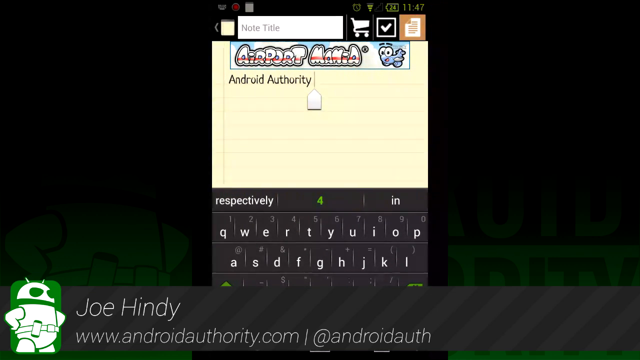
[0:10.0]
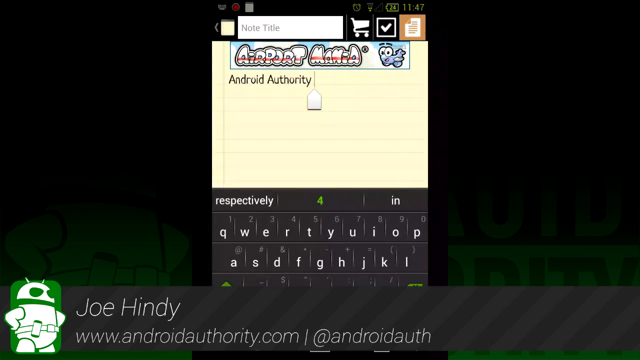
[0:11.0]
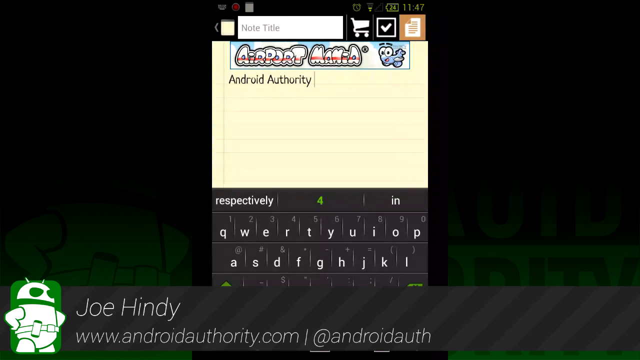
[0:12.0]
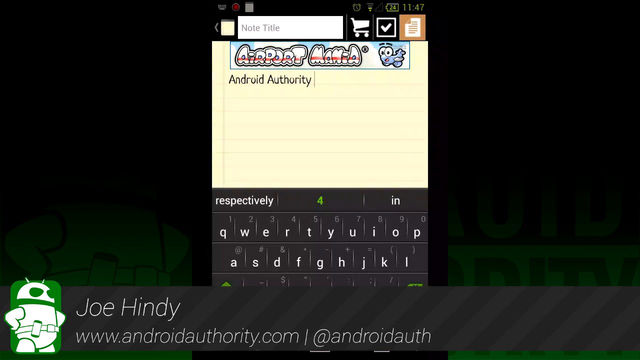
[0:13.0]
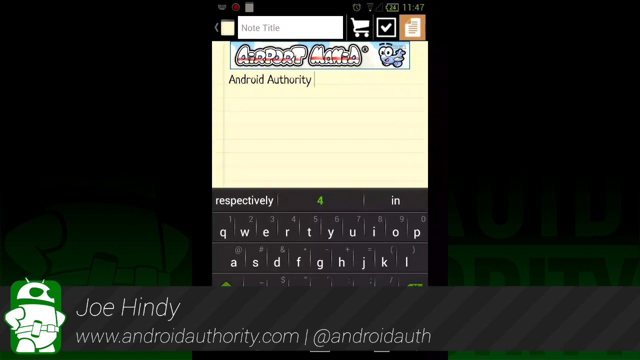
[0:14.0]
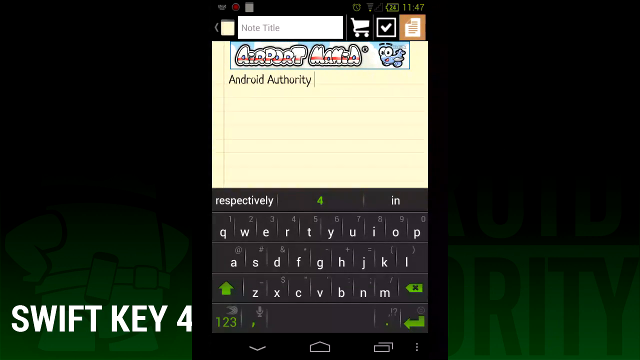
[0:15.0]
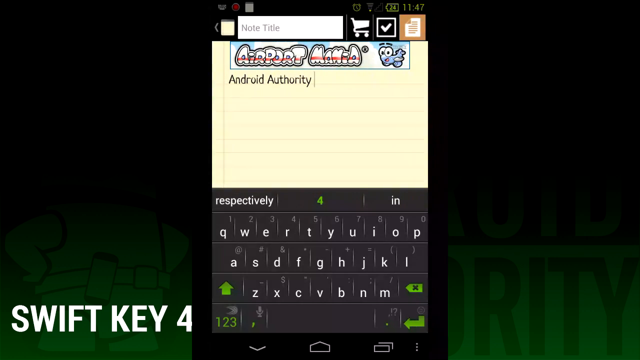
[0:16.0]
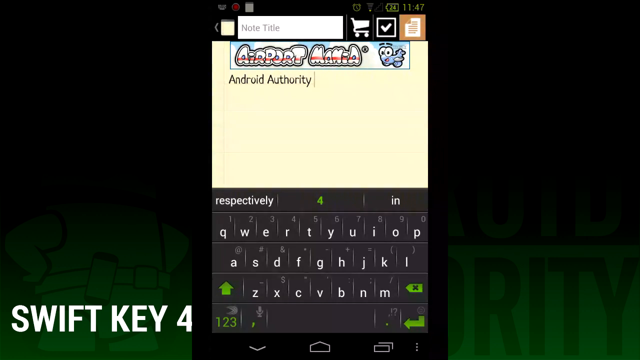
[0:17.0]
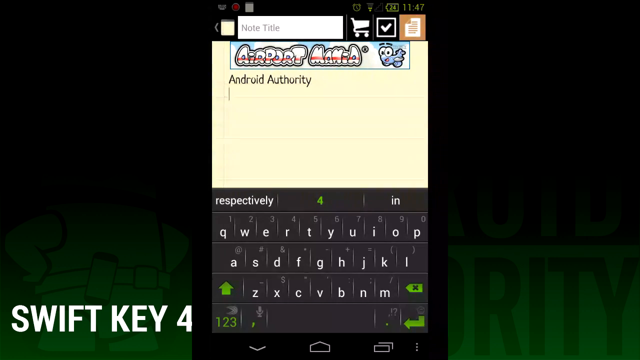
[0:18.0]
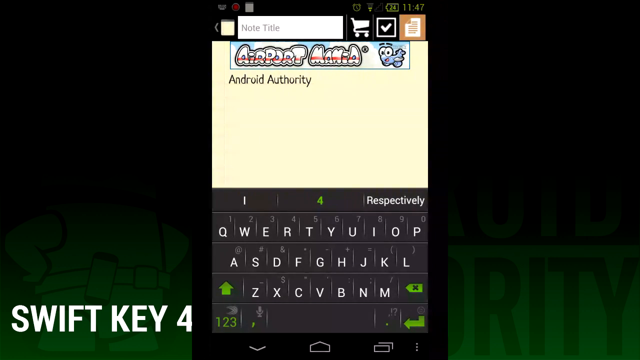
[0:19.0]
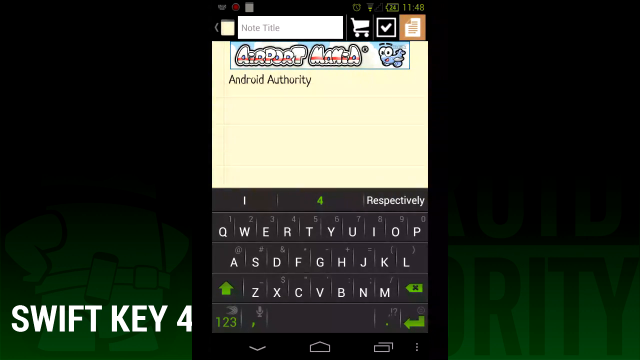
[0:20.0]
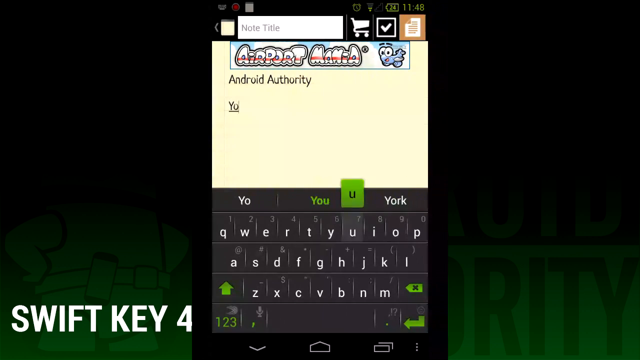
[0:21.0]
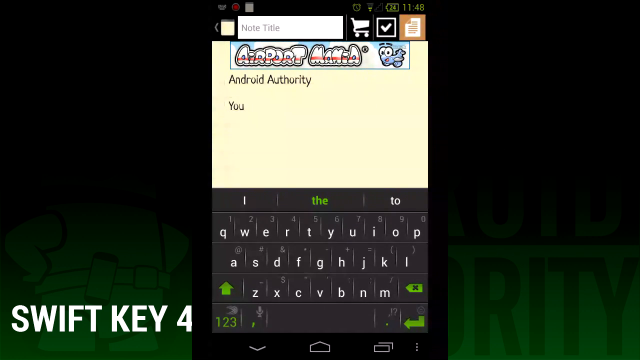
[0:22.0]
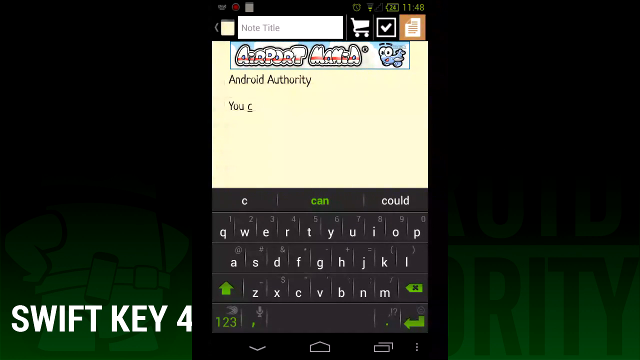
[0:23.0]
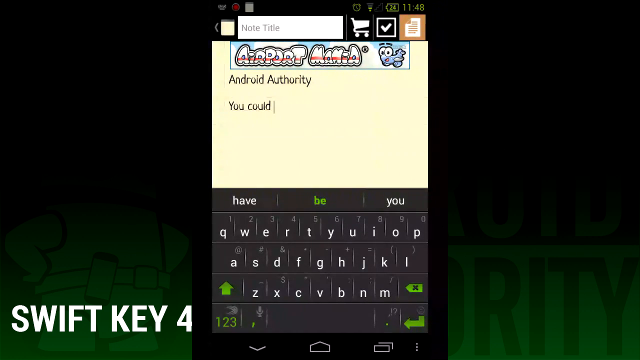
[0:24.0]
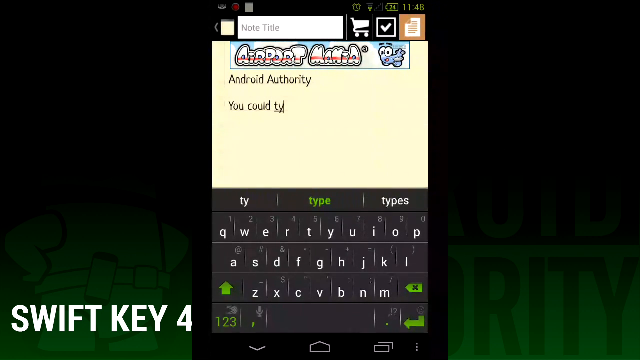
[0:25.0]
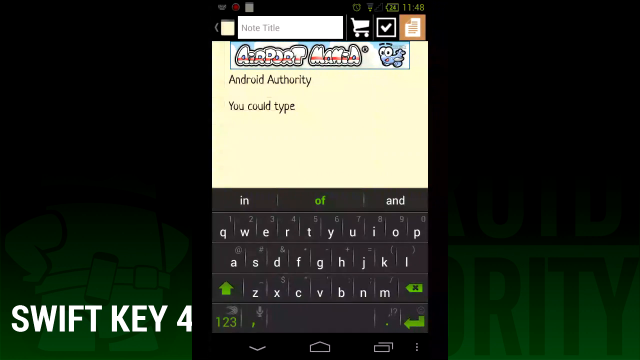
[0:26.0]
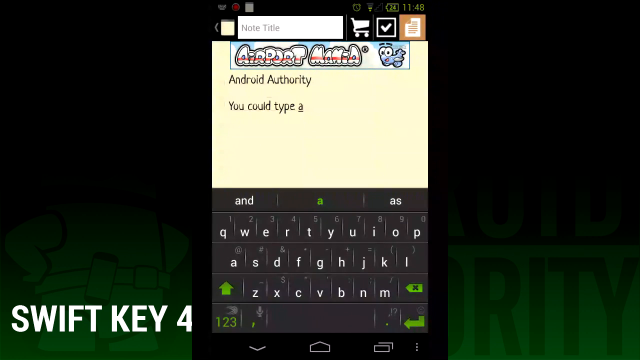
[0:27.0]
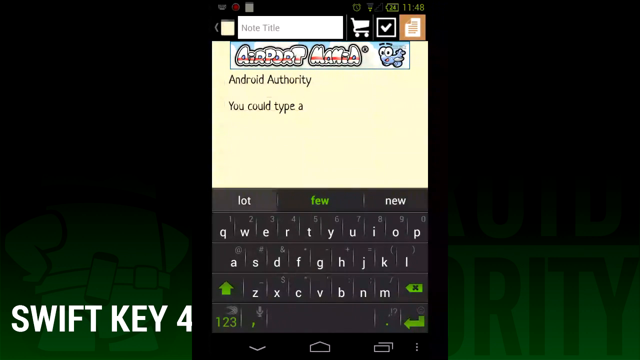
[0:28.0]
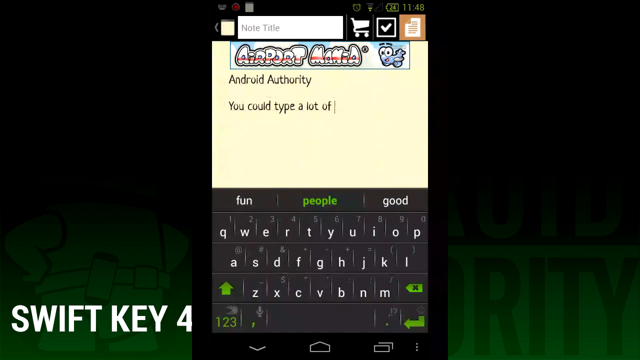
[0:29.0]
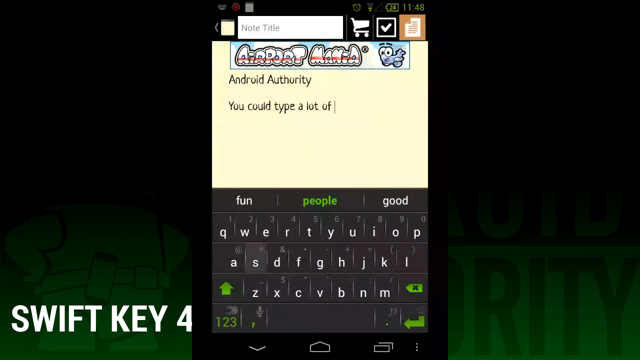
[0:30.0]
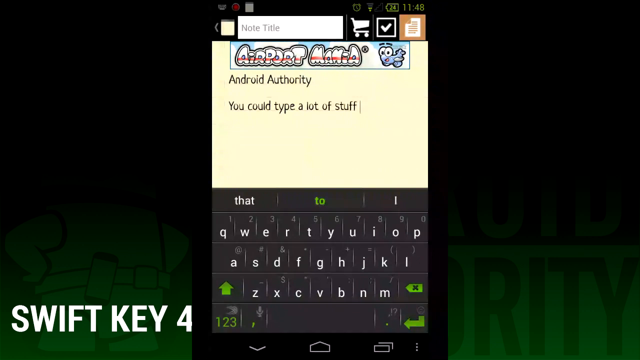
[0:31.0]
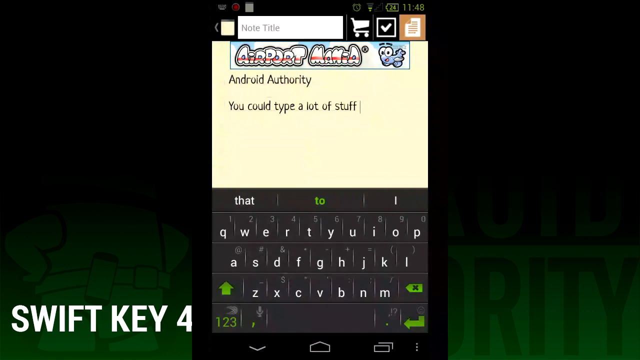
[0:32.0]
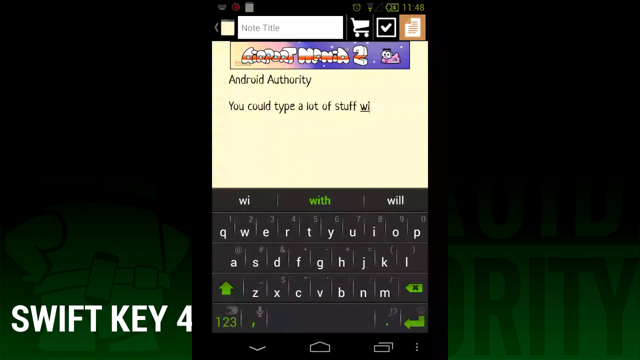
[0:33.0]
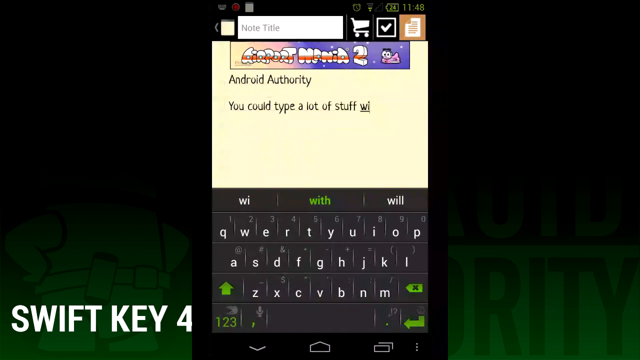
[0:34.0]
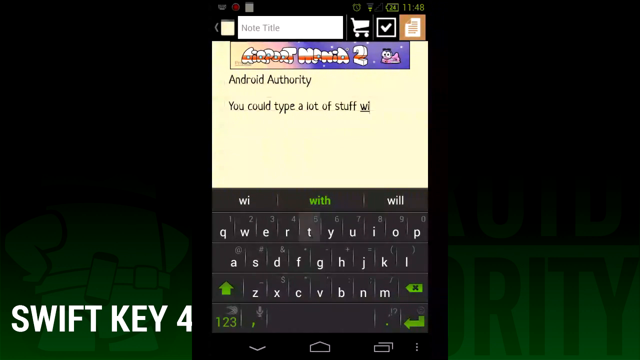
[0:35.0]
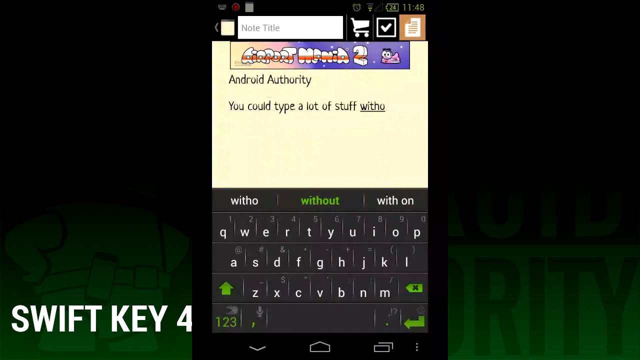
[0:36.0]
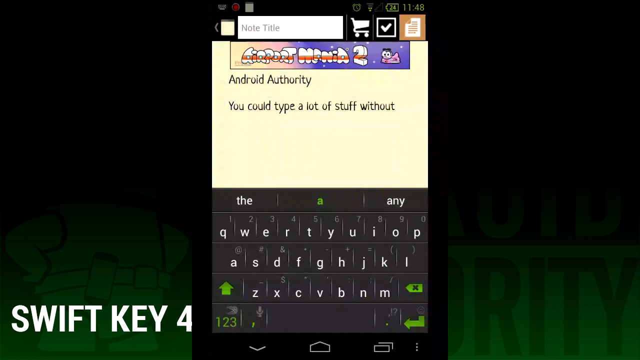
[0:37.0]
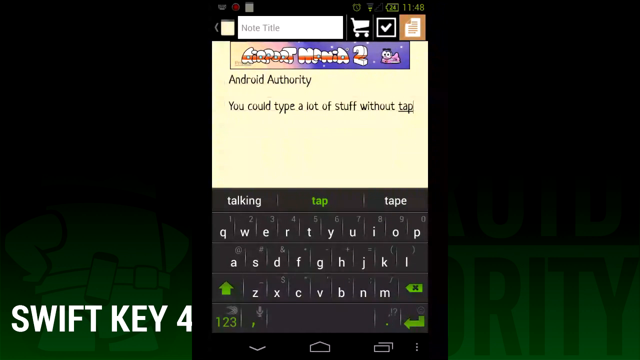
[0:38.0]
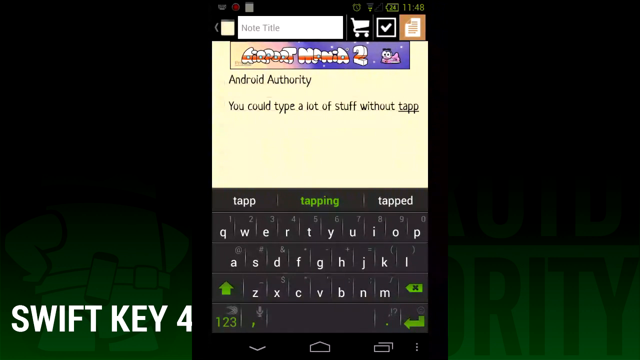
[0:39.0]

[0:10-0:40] Something pops up that looks like someone's phone screen. A white box says "note title", and to its right is a white shopping cart. There is a white check mark with a white box around it, and something that looks like a sheet of paper with lines on it. The time in the upper right-hand corner reads "11 47". A person types "Android Authority", and "SwiftKey 4" appears in the lower left-hand corner. The typing continues with "you could type a lot of stuff without tapping" and then stops. The device looks like a phone; on the upper left side of the keypad it says "respect respectively", and below are the usual keys of a phone keyboard.